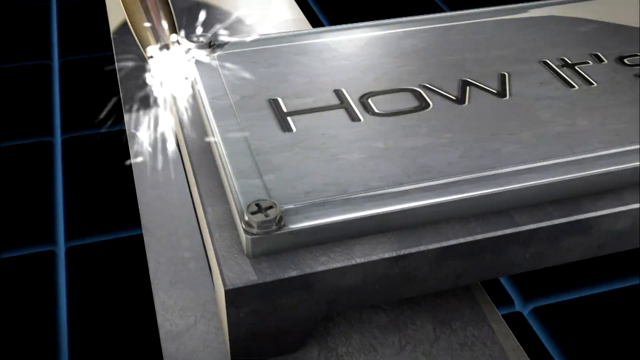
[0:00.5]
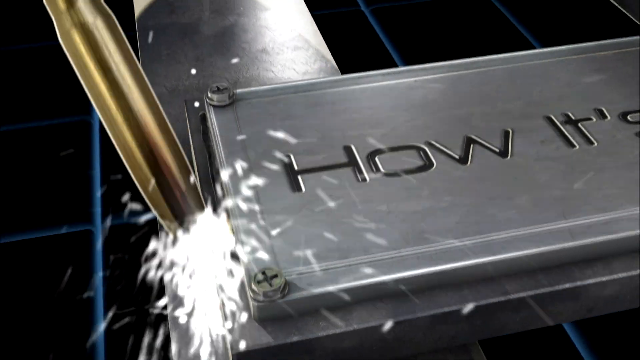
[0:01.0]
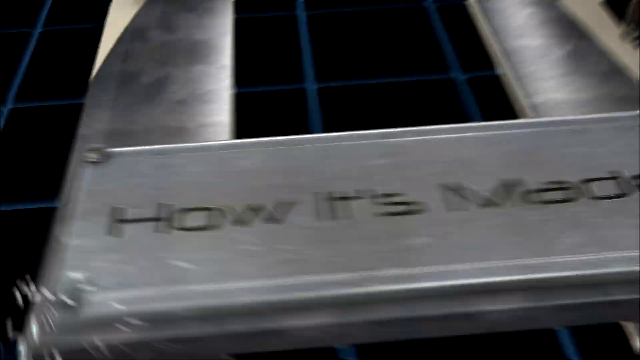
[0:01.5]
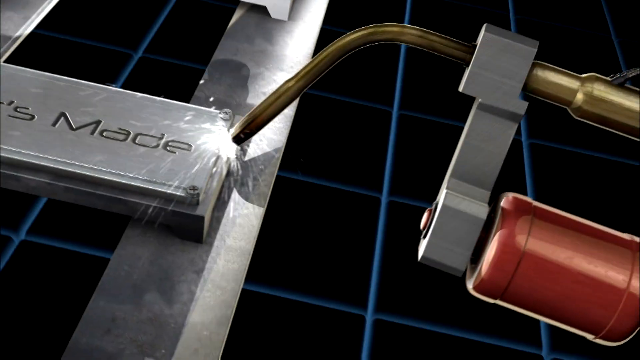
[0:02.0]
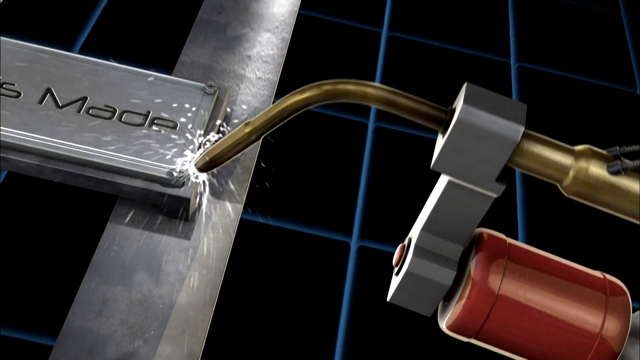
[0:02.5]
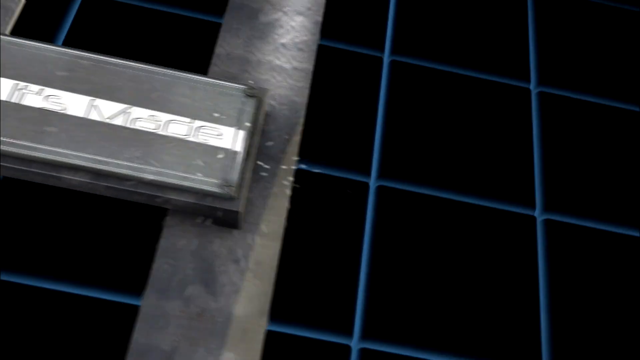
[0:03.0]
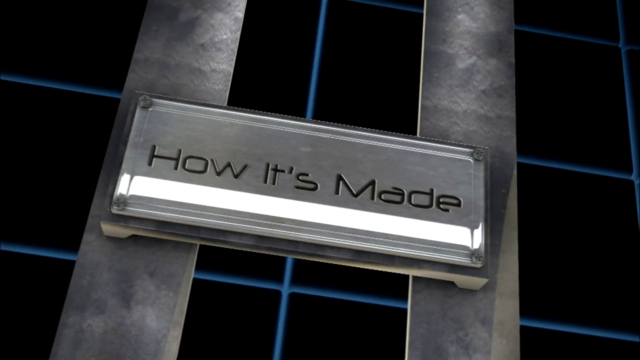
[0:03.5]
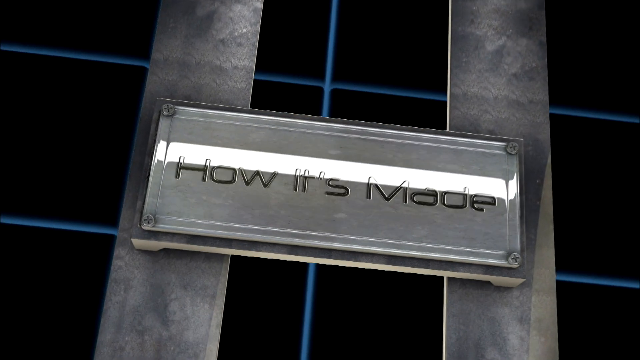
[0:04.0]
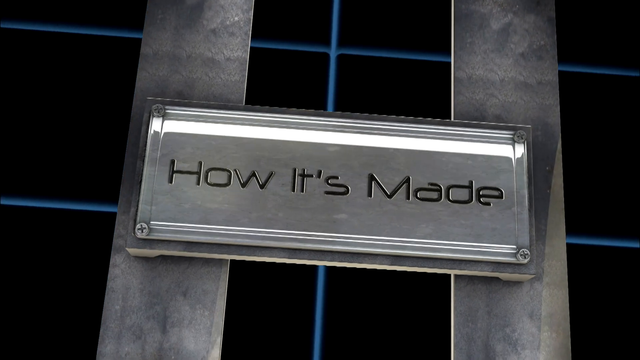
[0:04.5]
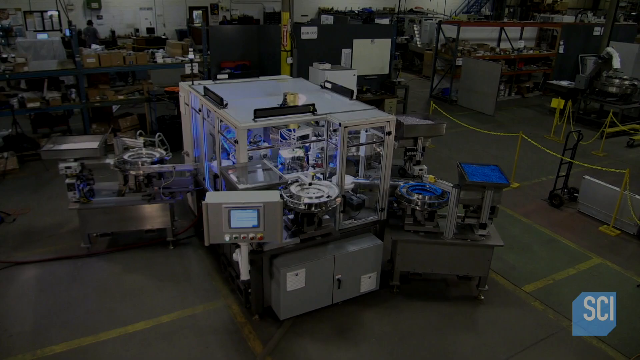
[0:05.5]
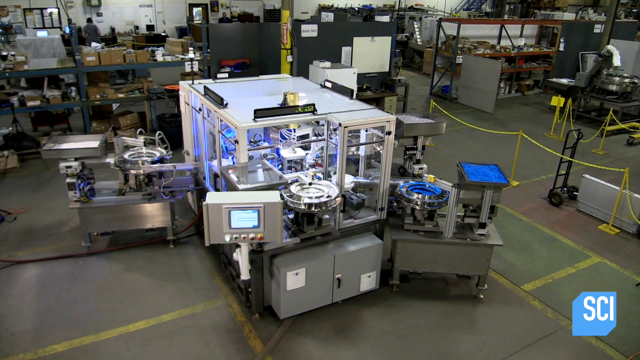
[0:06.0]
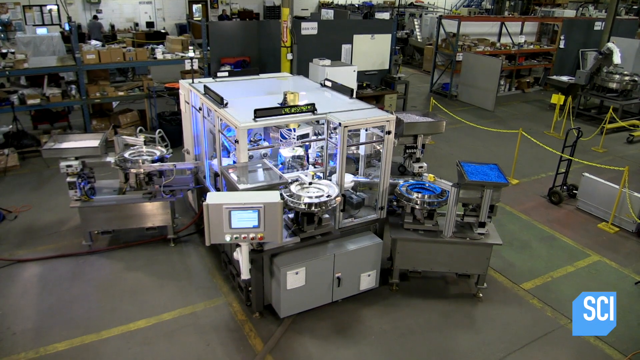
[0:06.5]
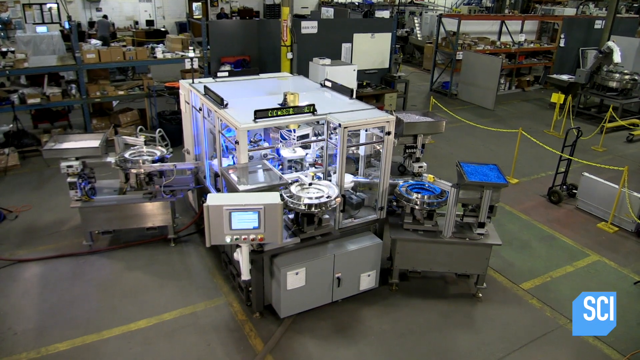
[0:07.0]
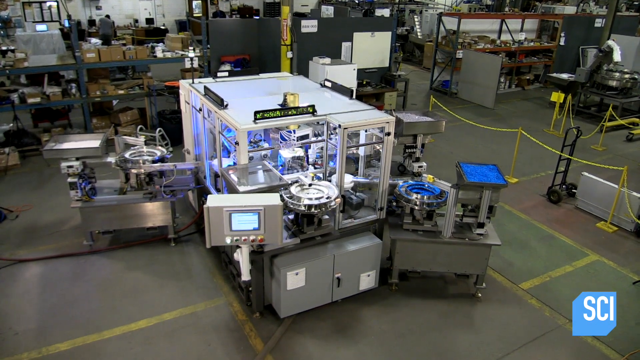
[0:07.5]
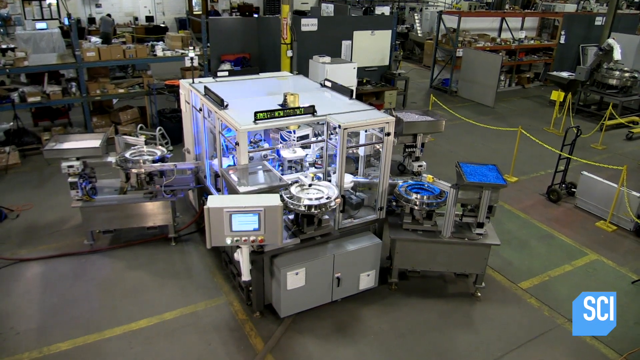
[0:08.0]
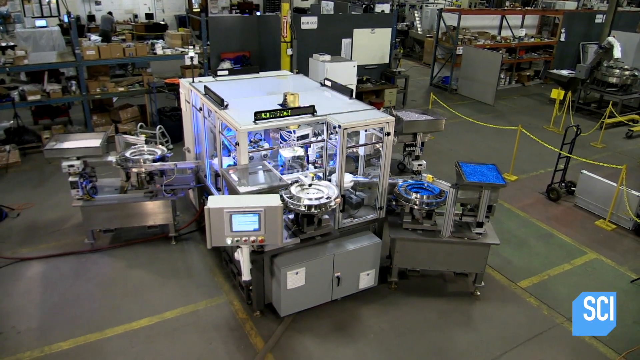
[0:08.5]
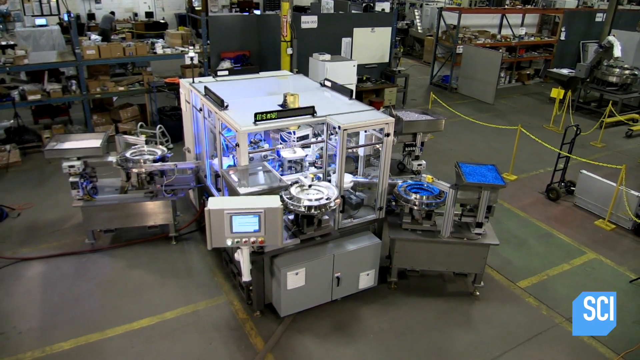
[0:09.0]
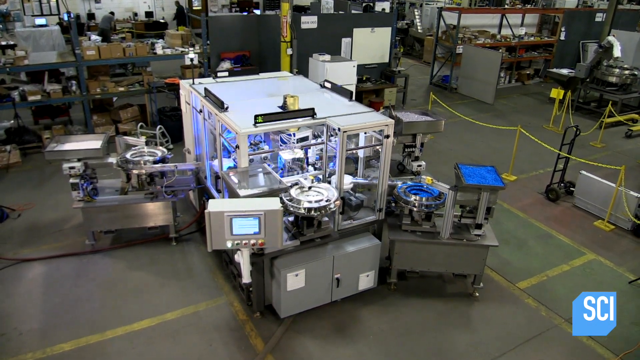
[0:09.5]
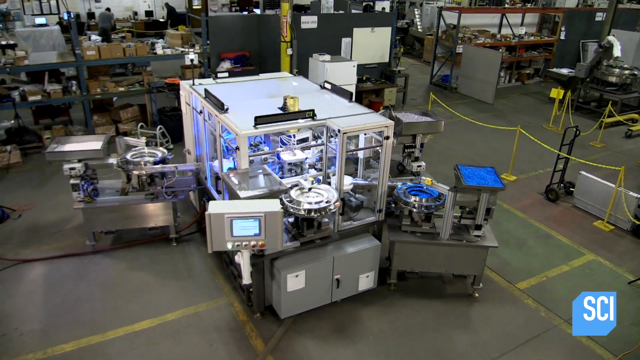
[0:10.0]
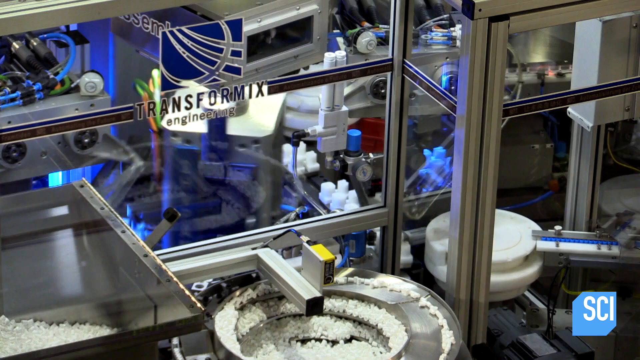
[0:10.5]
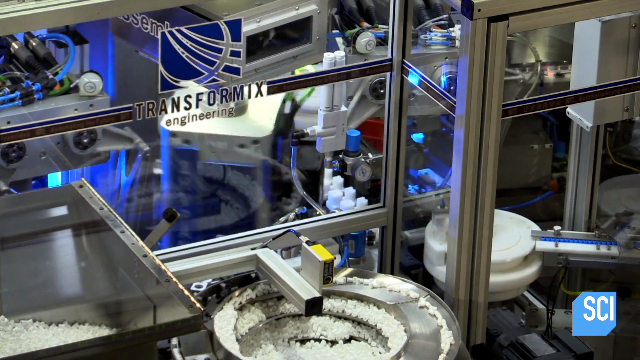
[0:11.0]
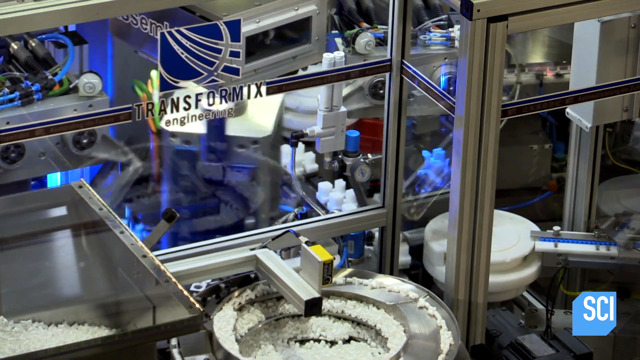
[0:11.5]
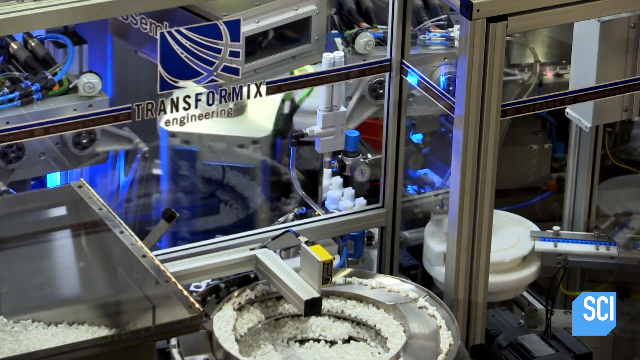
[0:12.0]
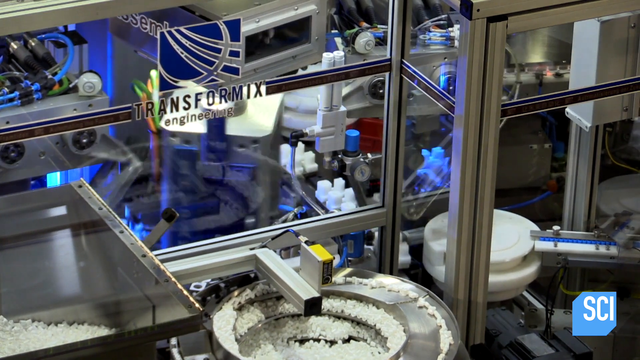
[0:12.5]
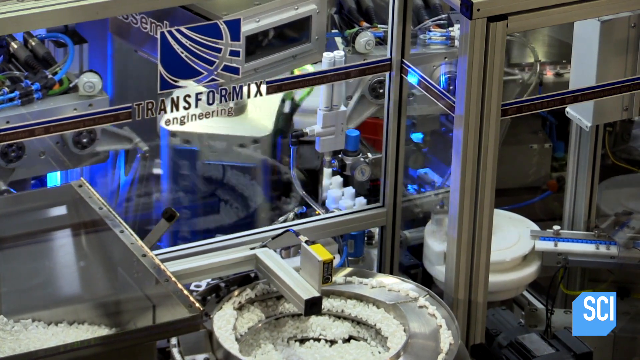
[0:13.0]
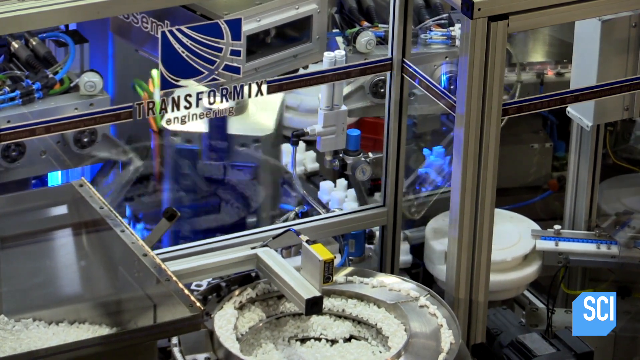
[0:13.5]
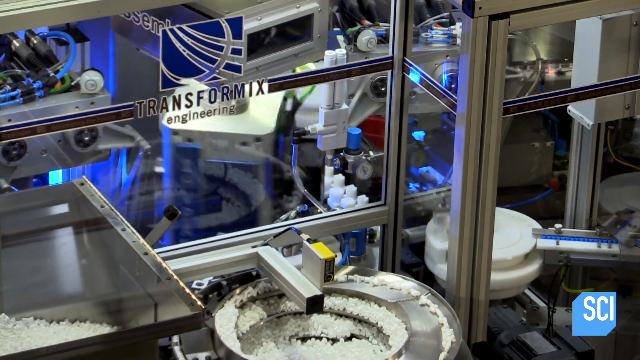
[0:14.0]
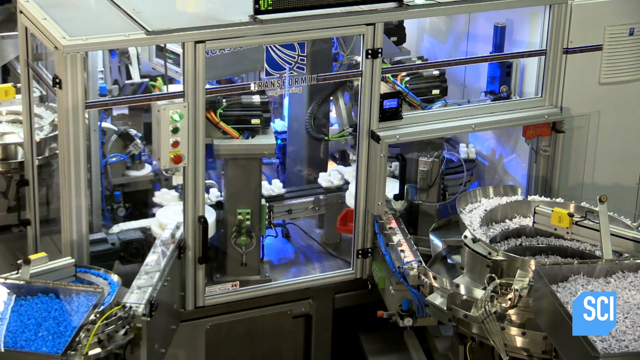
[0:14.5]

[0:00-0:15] This looks like a clip from the TV show How It's Made. It shows a small housing of some kind inside a building, and there appears to be a machine inside the housing that is making things. Yellow rope surrounds it, and everything looks gray. Machines are moving, and the video keeps cutting back to the How It's Made imagery. The inside of the machine is slightly blue. A spinning part is shown repeatedly, turning around and around; this piece is cube-shaped and slightly blue. People appear to be walking in the background. There are yellow lines on the floor and yellow rope around the part of the machine that is making things.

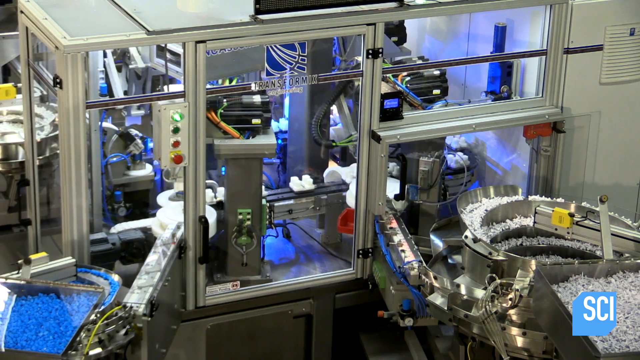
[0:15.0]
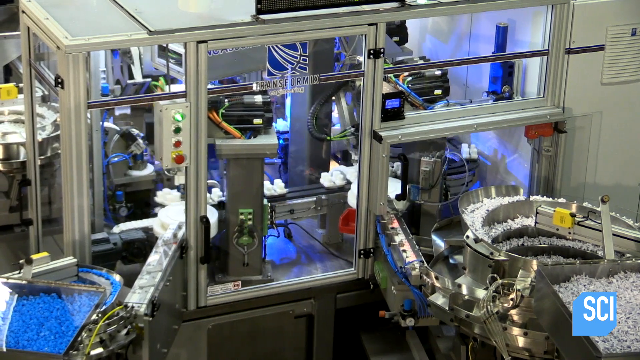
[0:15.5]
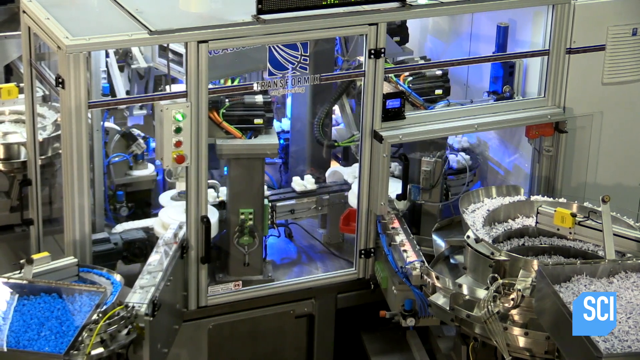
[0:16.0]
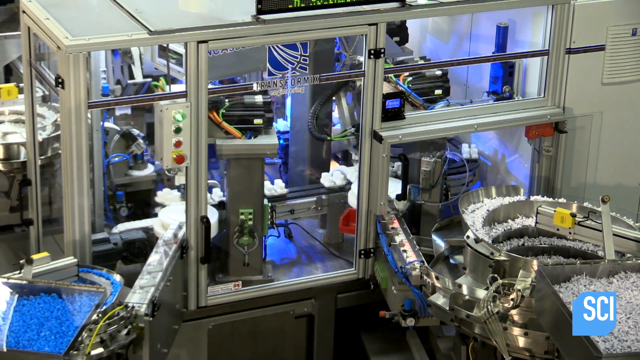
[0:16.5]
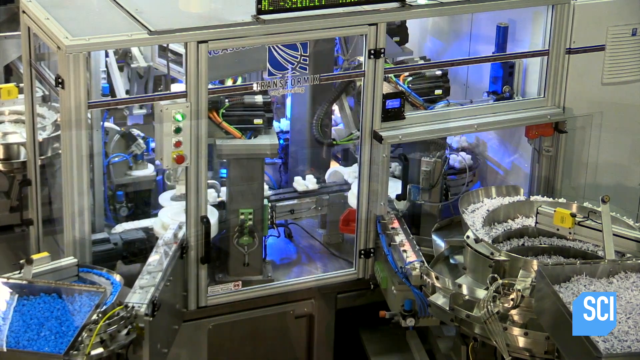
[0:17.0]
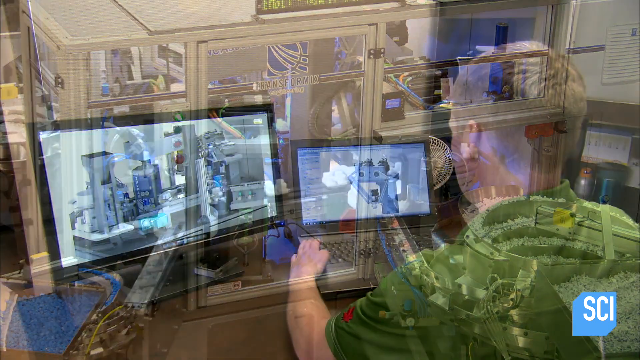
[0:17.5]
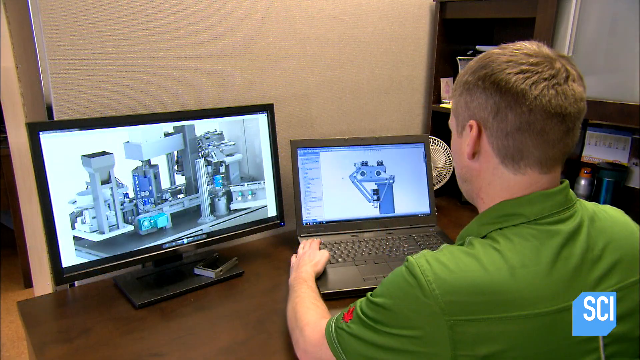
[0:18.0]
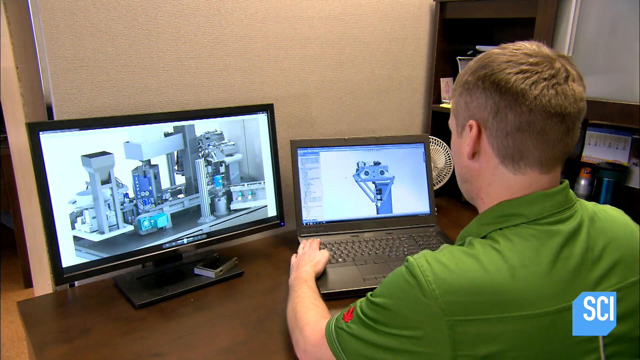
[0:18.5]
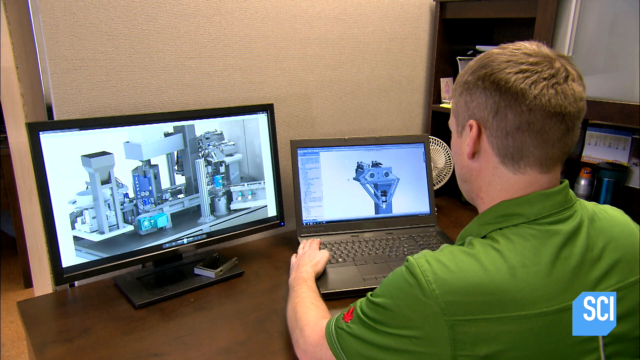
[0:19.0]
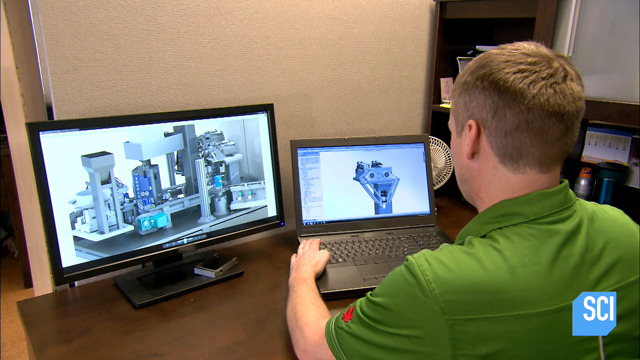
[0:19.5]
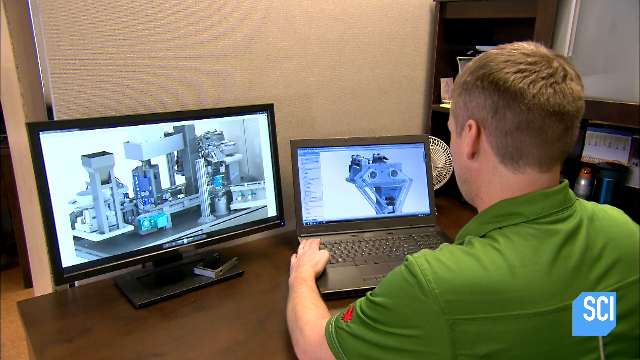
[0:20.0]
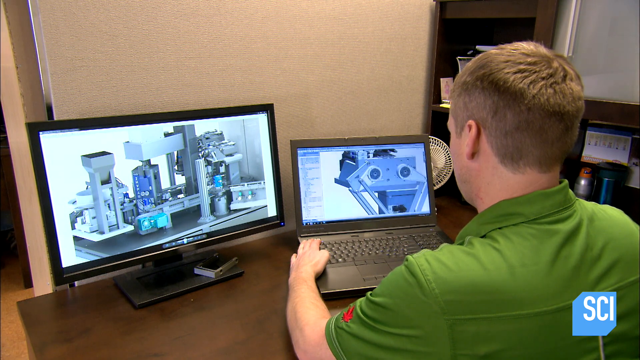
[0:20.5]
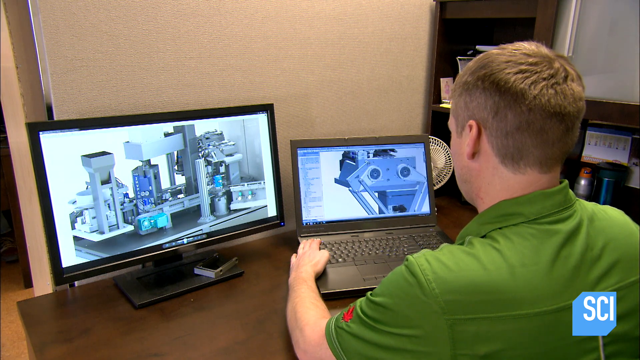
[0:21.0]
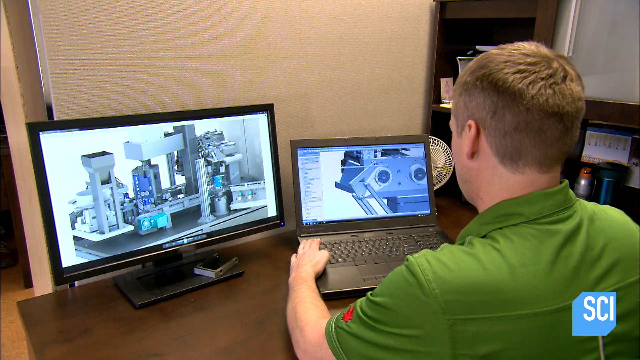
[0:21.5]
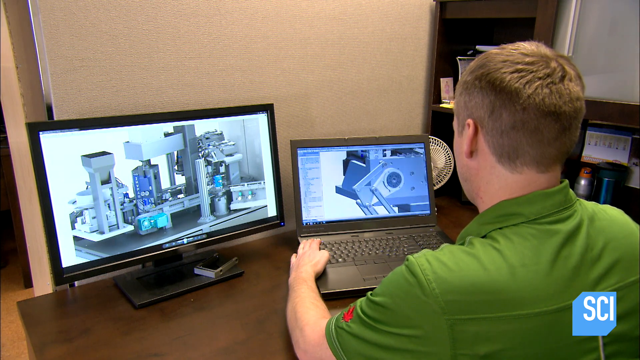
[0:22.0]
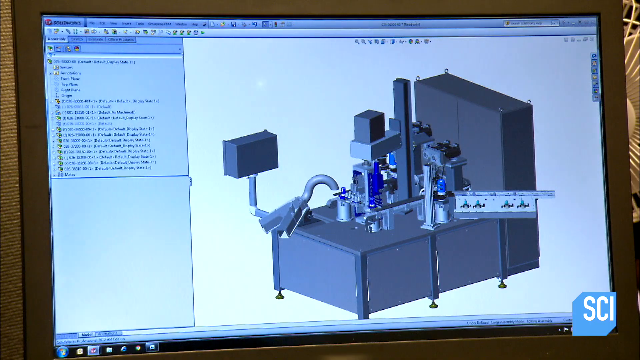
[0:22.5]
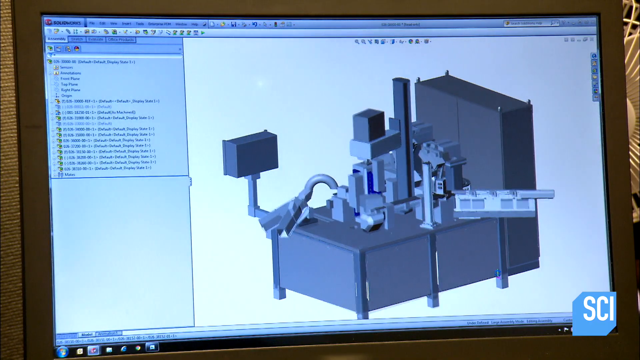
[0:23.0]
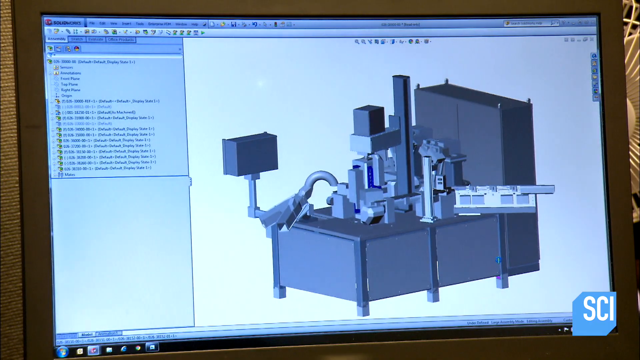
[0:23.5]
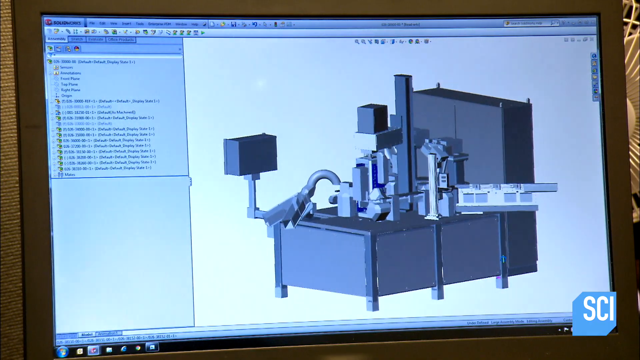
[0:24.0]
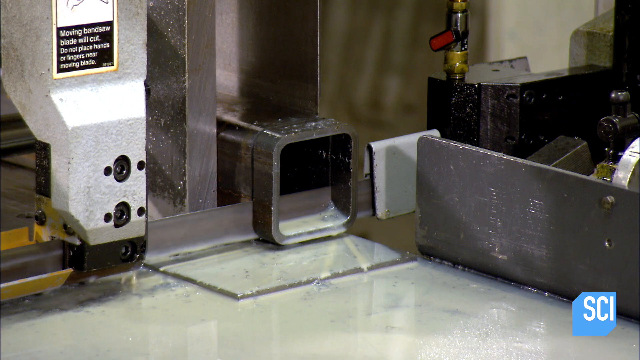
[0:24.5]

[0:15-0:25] What looks like the same warehouse setting is shown, but now an office appears, where a man with blonde hair in a green shirt sits at a computer with his back to the camera, looking at some sort of digital model on a desktop screen to his left. He is possibly modeling something on the computer. Different machines are also shown, and they appear to be making things. There appears to be some sort of saw cutting a piece of metal. The Science Channel logo is in the bottom right corner.